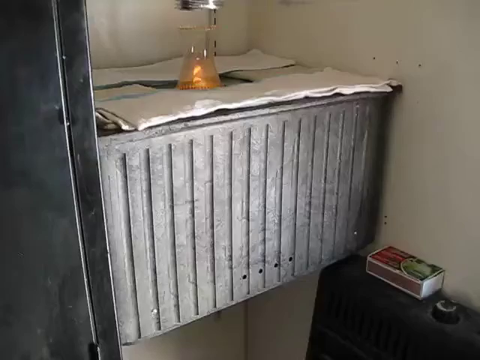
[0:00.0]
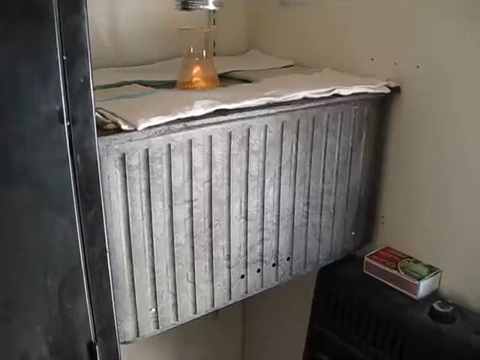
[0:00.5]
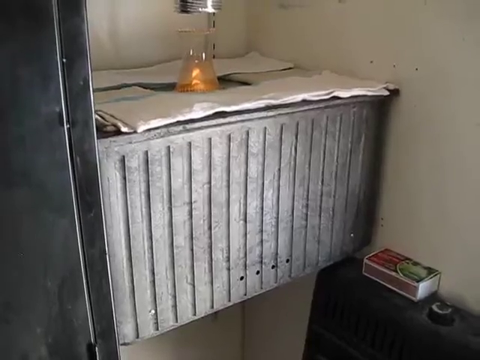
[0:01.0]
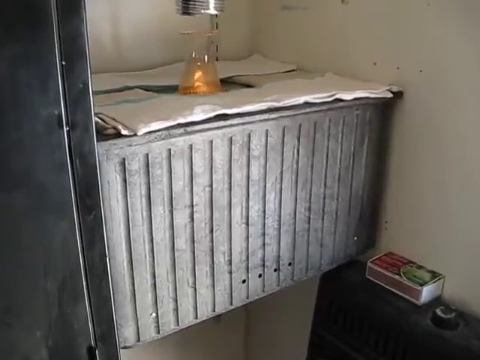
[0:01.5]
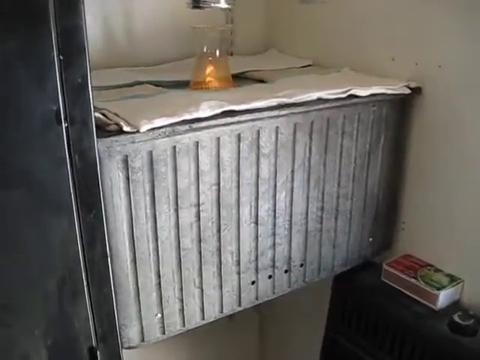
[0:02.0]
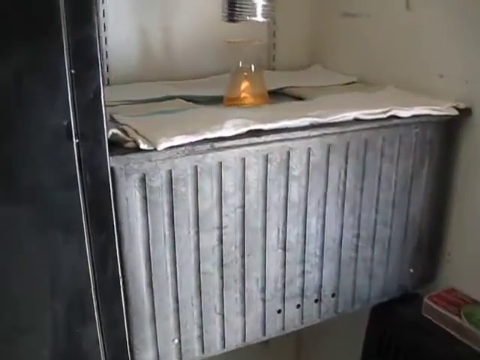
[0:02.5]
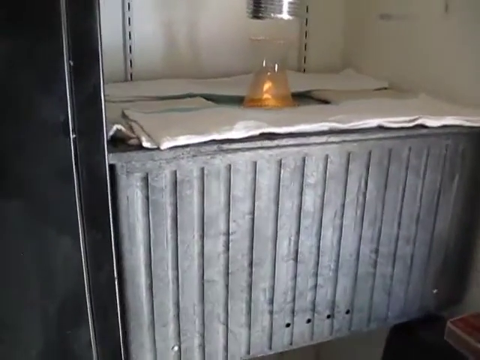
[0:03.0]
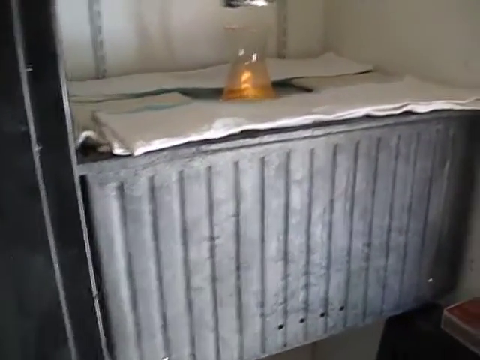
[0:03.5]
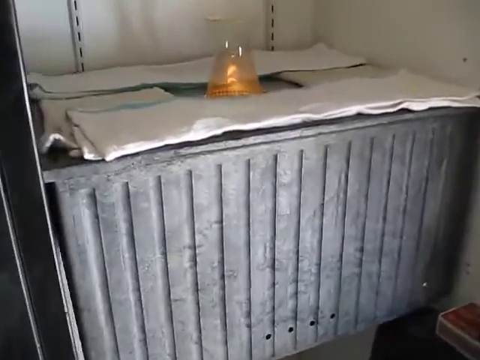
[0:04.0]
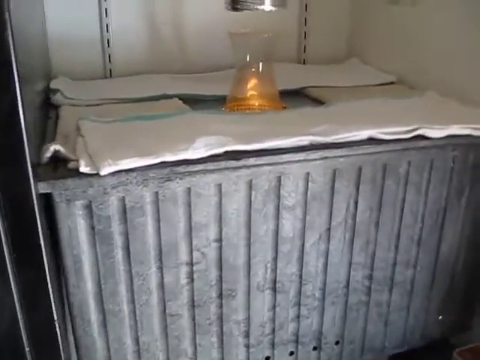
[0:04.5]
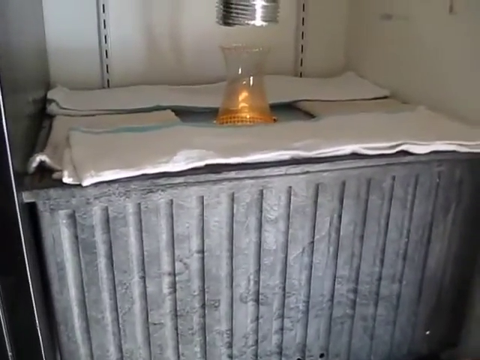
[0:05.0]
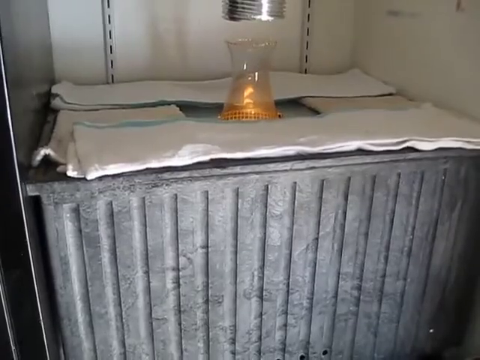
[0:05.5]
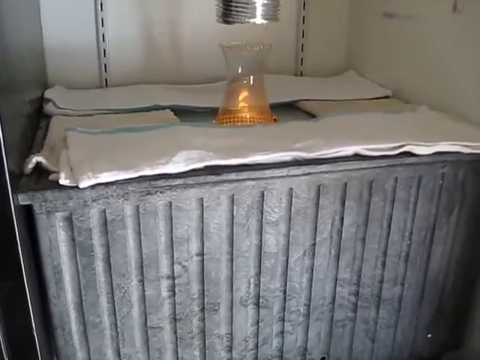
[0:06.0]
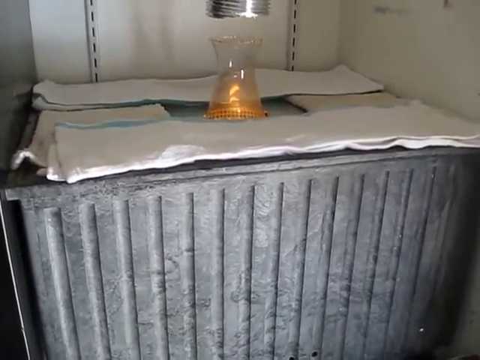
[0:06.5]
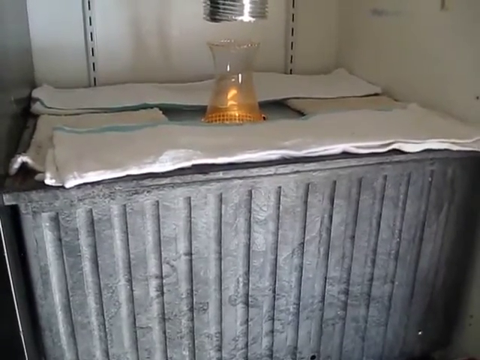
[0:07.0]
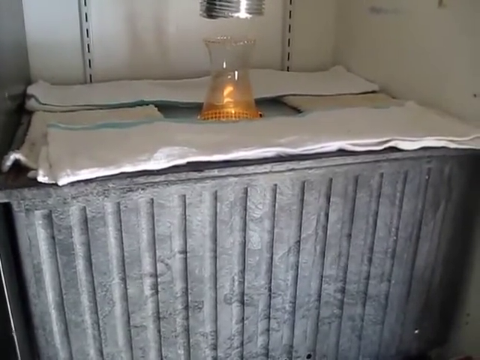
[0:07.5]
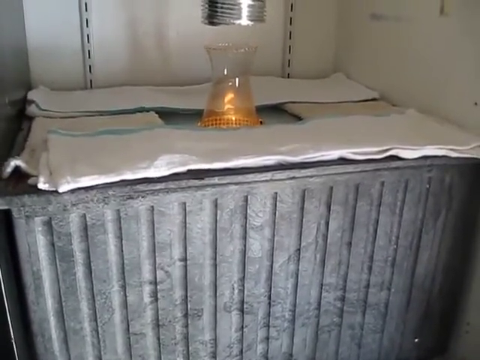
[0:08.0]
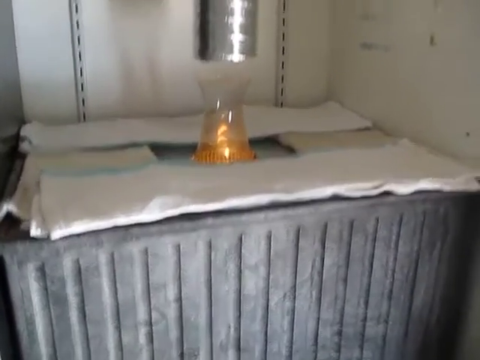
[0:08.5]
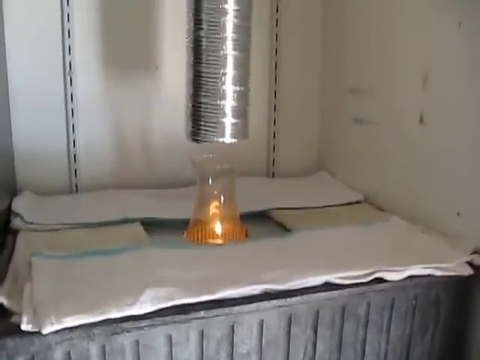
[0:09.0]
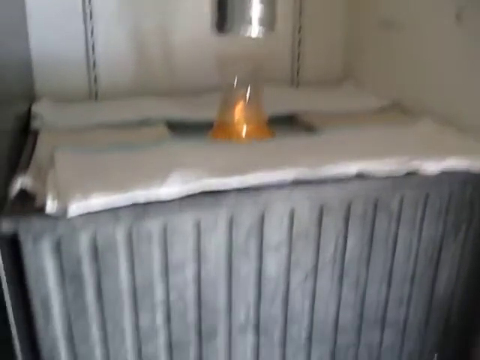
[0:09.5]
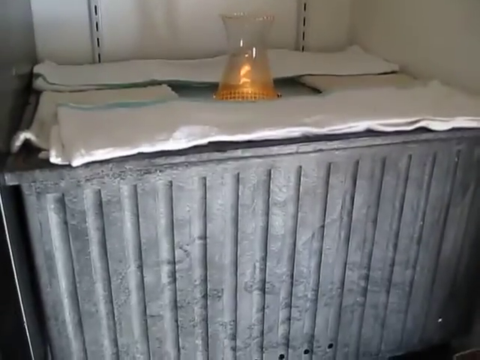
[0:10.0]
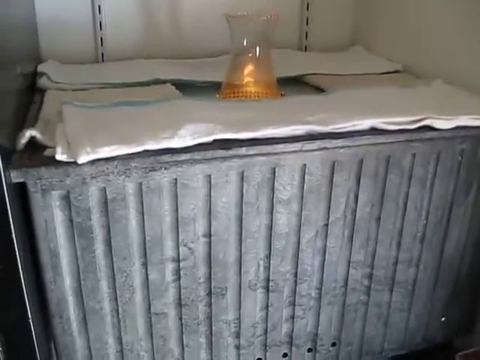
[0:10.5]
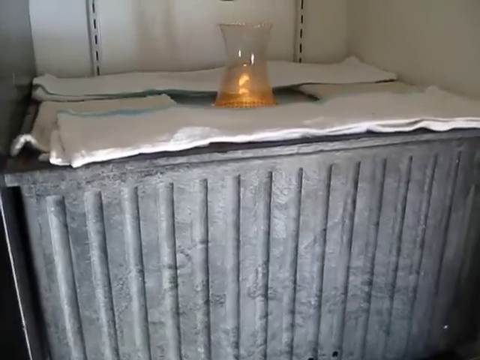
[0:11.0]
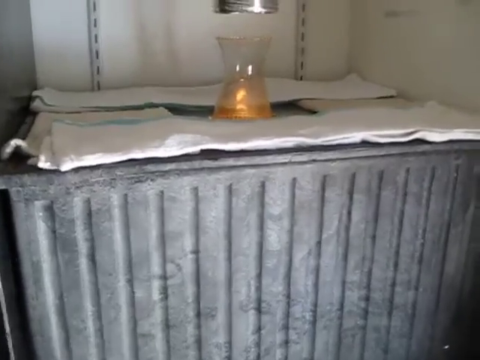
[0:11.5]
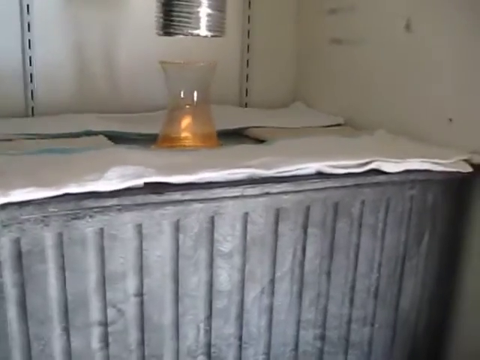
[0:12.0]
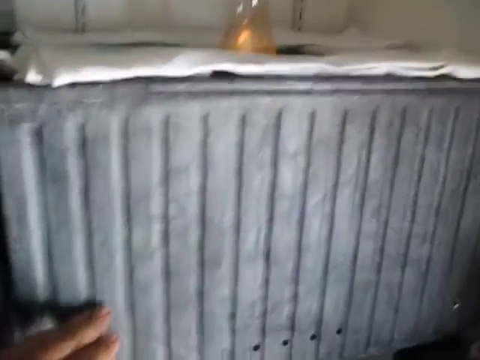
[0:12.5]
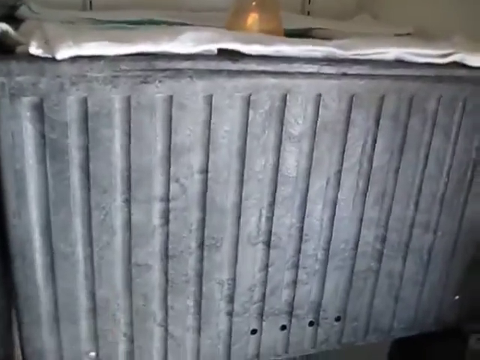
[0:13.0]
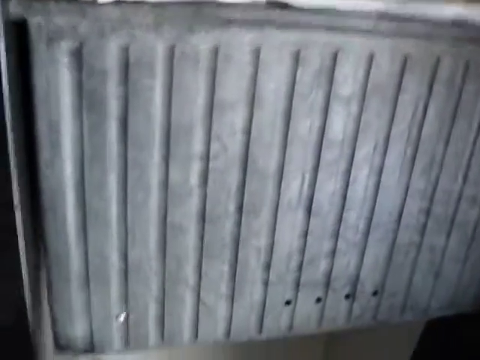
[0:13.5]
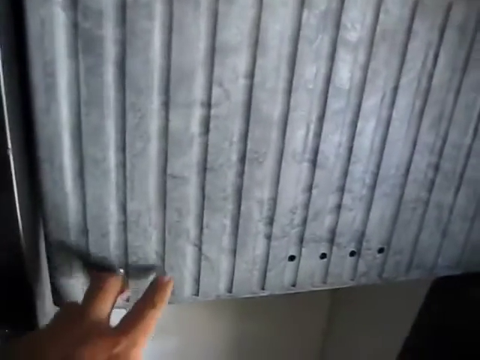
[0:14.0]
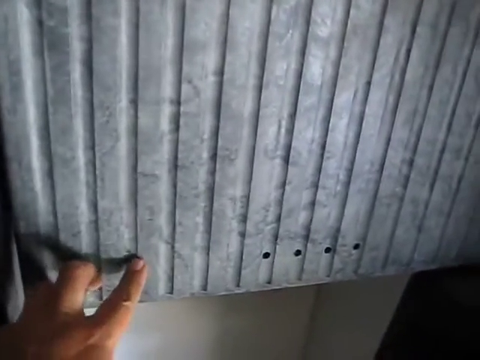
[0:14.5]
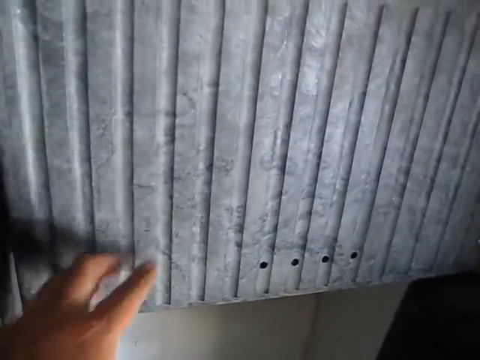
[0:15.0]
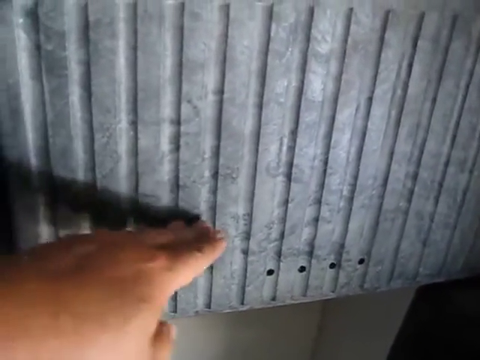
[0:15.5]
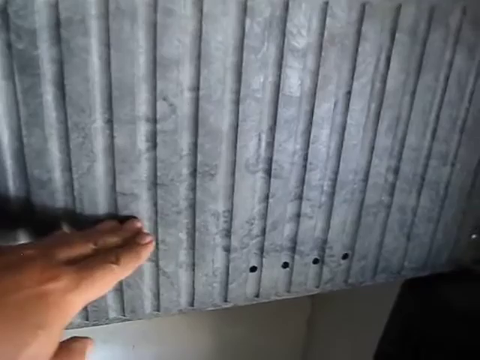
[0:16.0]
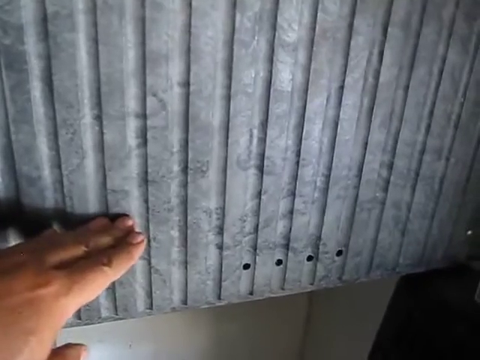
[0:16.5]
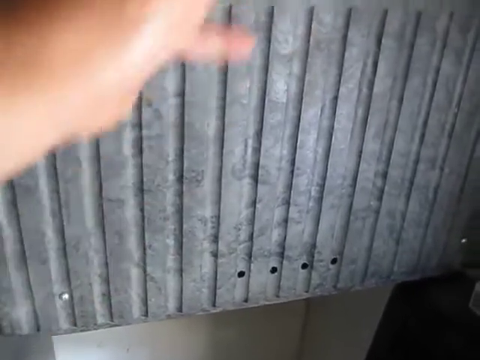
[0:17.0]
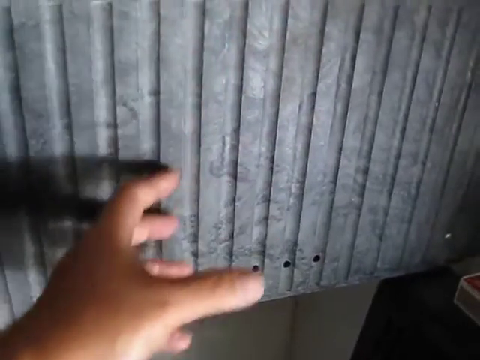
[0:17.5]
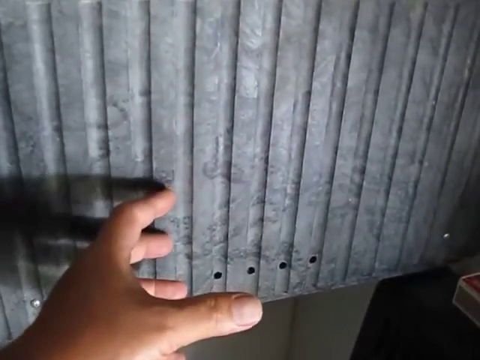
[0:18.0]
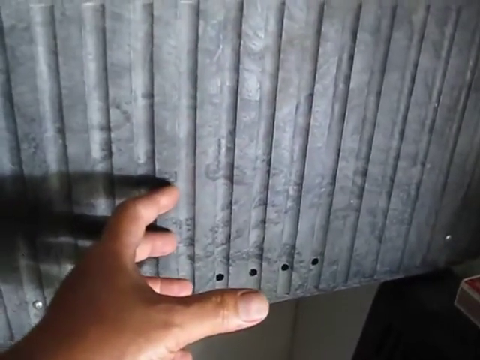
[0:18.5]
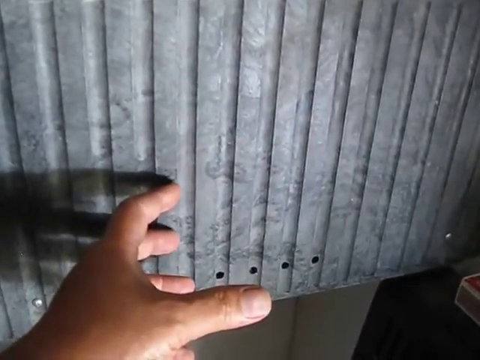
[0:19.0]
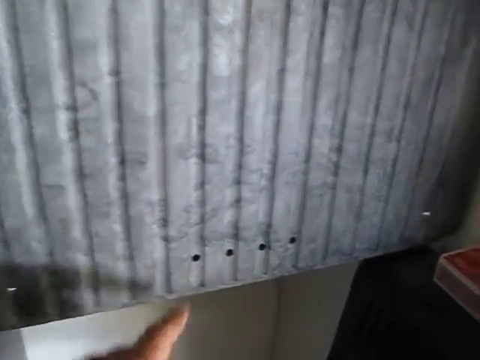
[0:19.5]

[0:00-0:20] The video opens on a silver sink with what appear to be paper towels on top of it, and a light in the middle. The camera zooms into a space of what appears to be plastic, with a plug at the top; this may be a place within a machine. A finger points at the metal shown. The area is surrounded by a white wall, and below it there is what appears to be a box, with something black at the top and in the bottom right corner, and black fencing on the left-hand side.